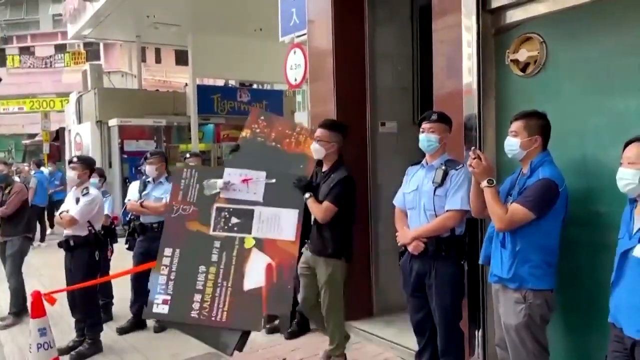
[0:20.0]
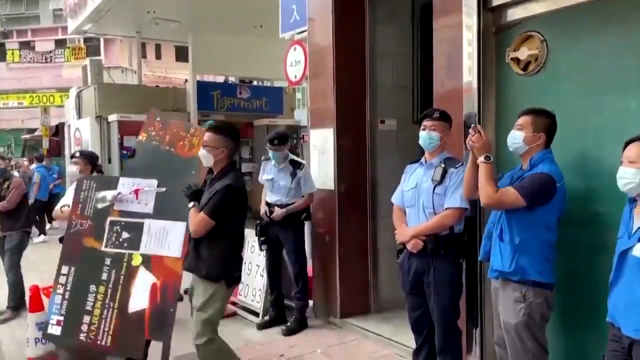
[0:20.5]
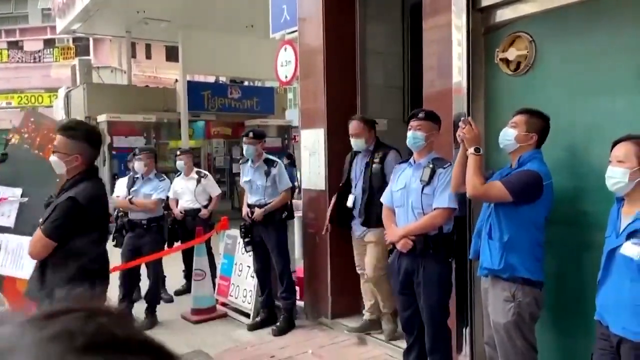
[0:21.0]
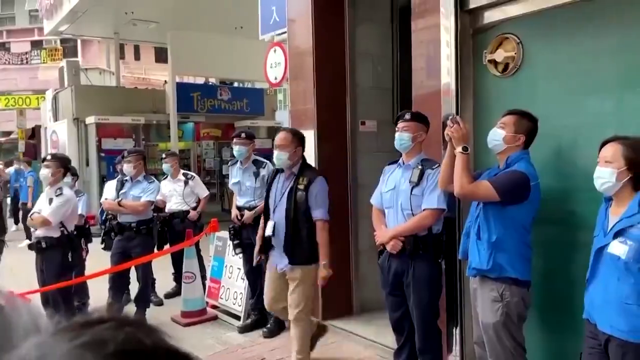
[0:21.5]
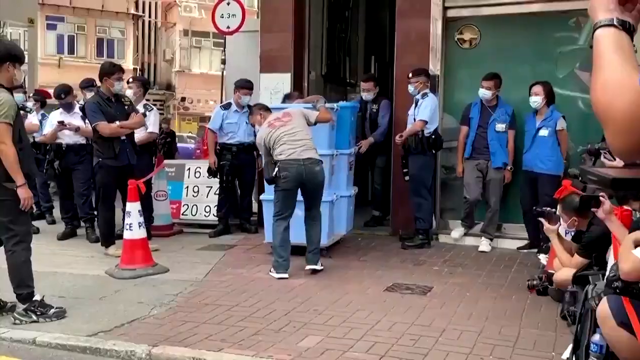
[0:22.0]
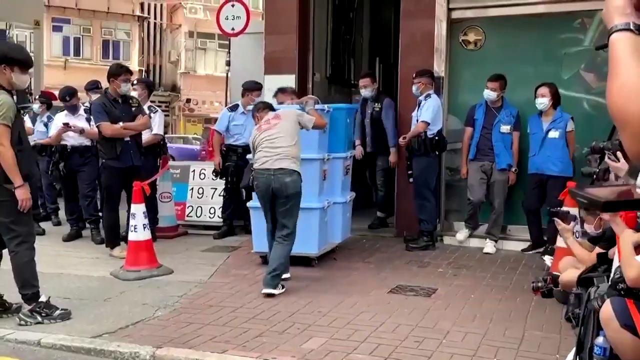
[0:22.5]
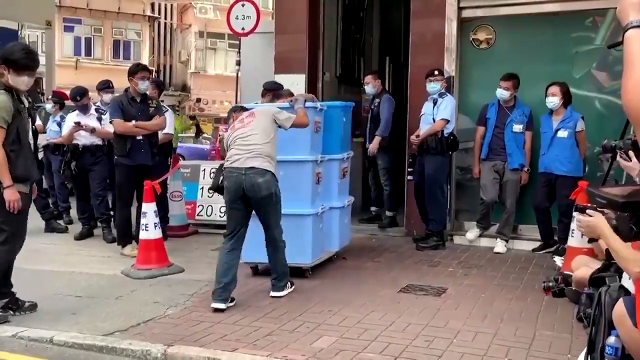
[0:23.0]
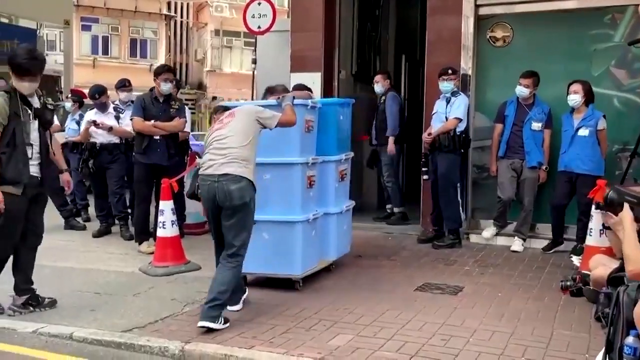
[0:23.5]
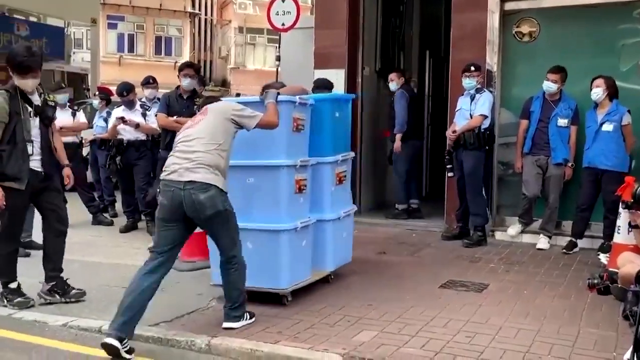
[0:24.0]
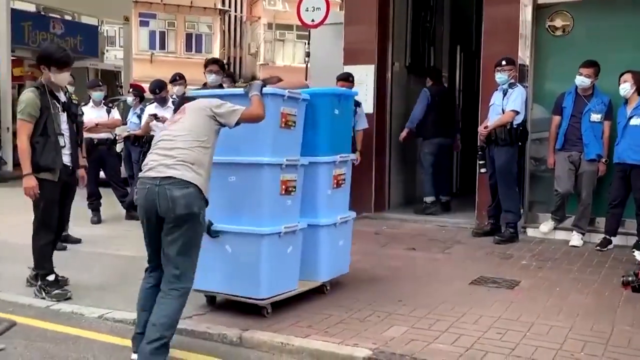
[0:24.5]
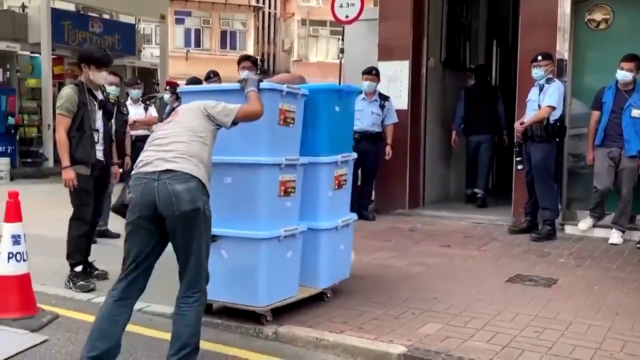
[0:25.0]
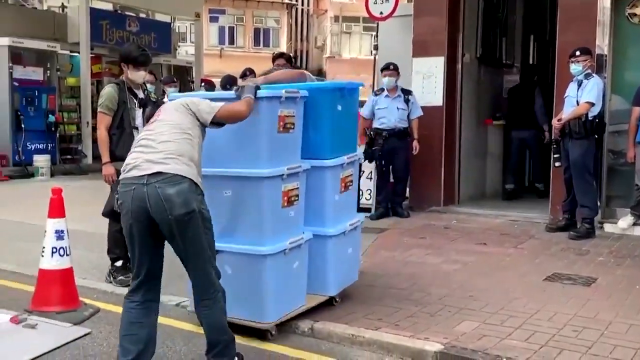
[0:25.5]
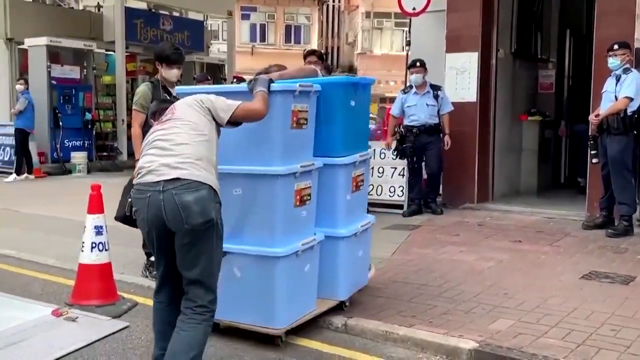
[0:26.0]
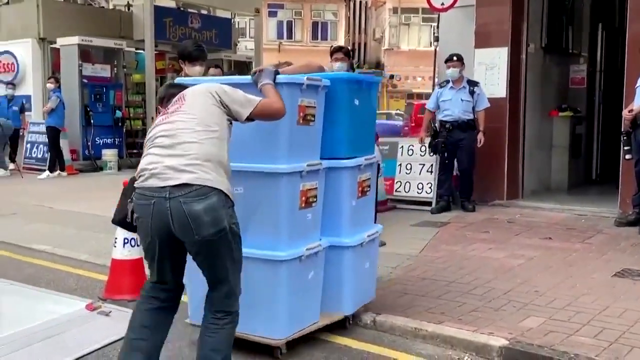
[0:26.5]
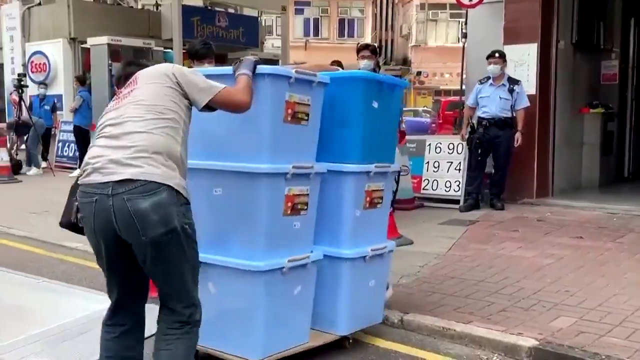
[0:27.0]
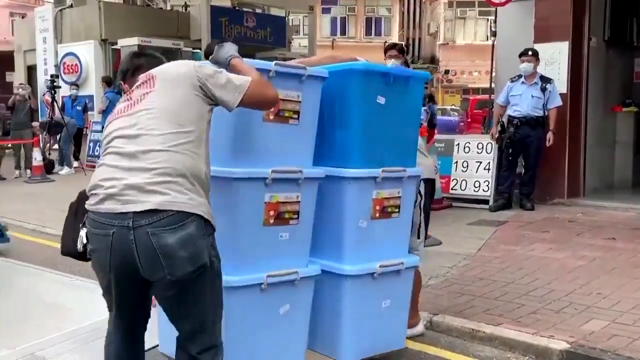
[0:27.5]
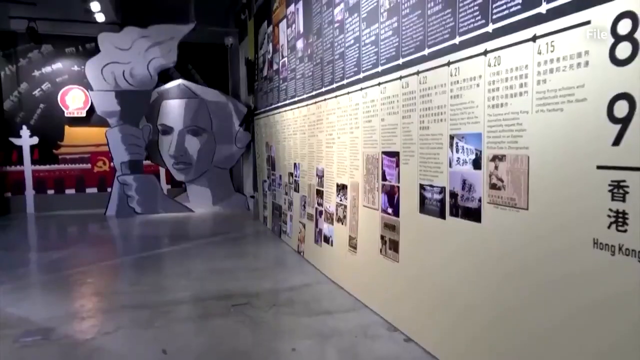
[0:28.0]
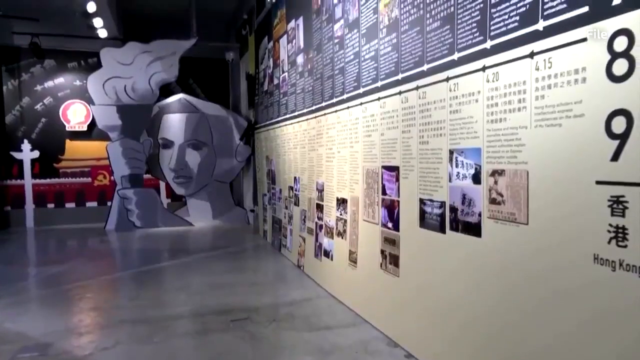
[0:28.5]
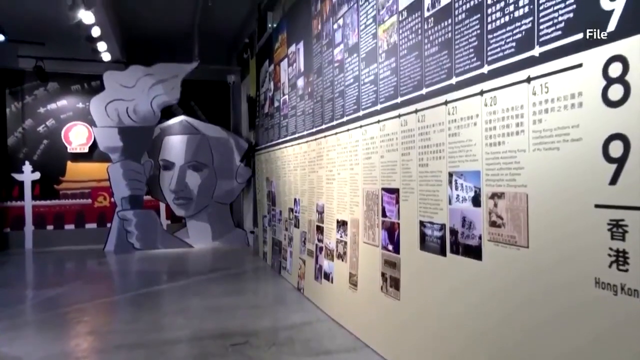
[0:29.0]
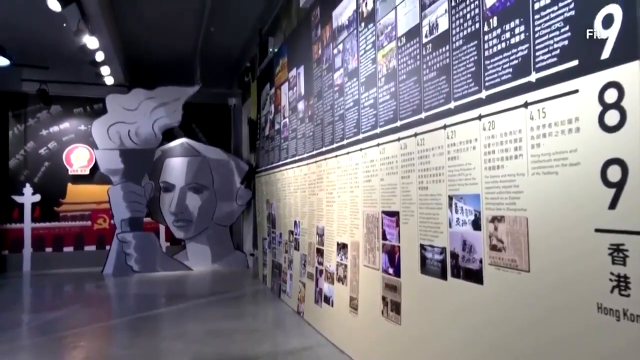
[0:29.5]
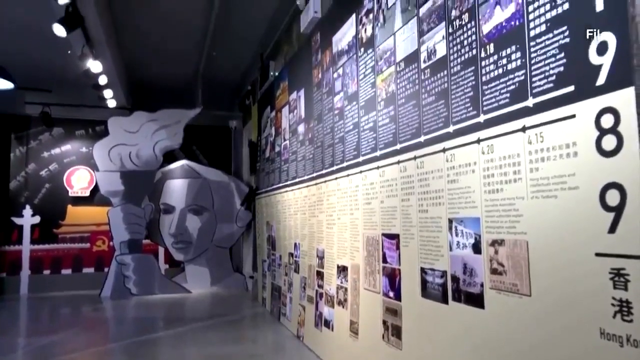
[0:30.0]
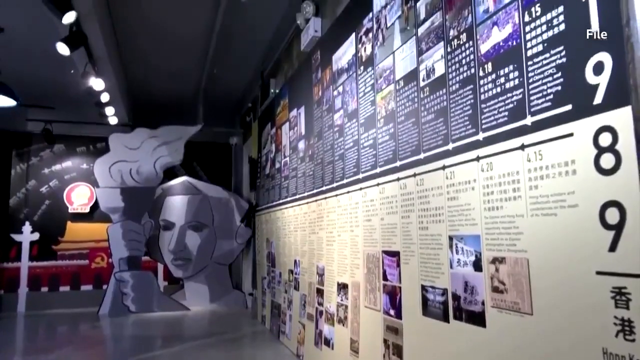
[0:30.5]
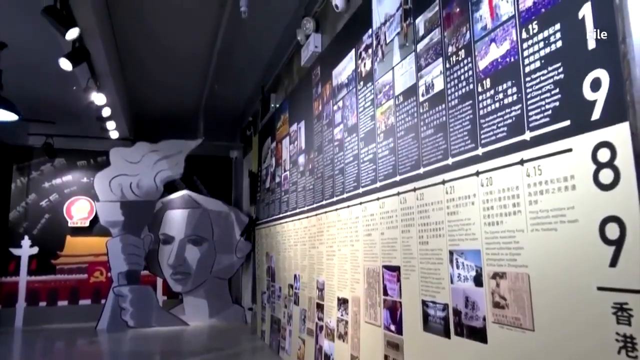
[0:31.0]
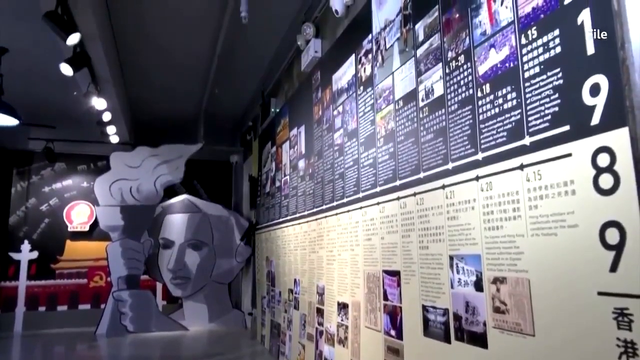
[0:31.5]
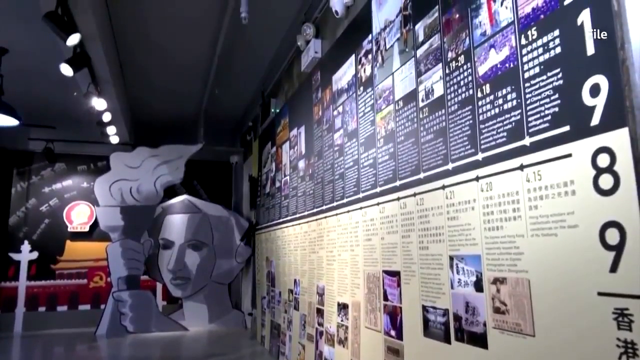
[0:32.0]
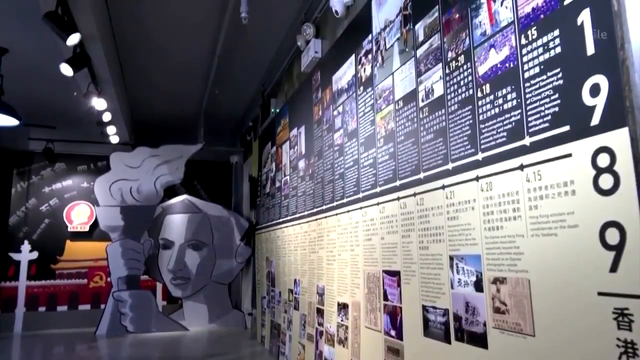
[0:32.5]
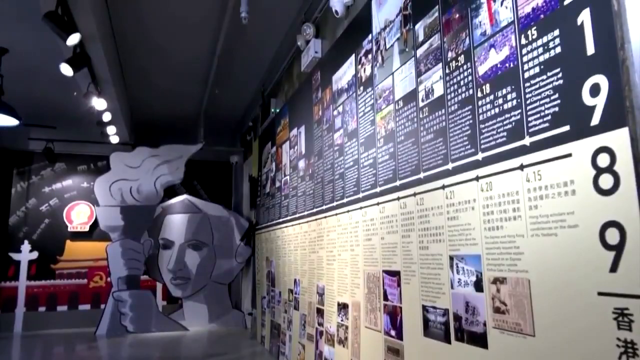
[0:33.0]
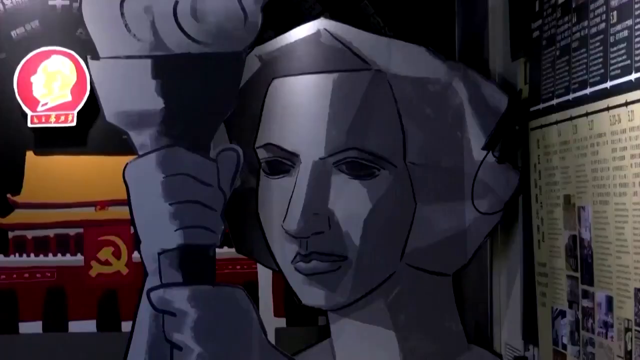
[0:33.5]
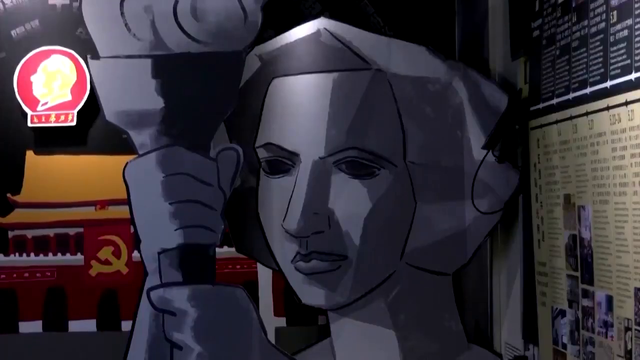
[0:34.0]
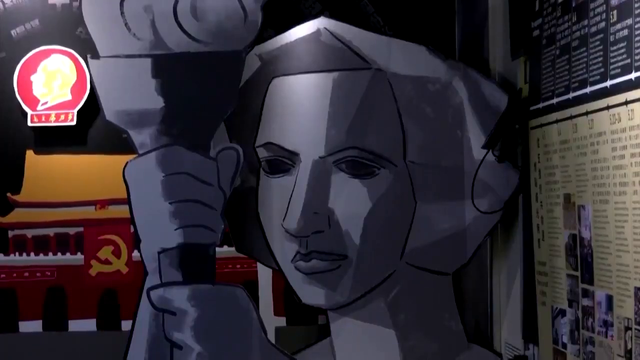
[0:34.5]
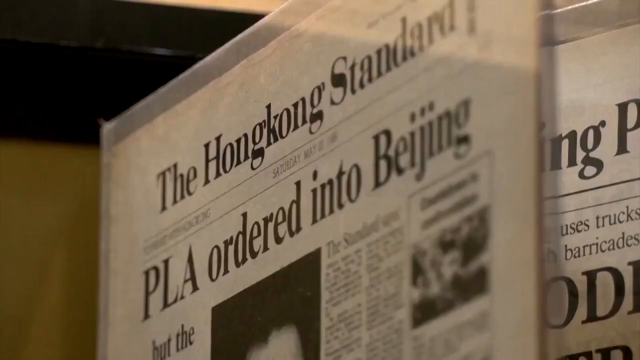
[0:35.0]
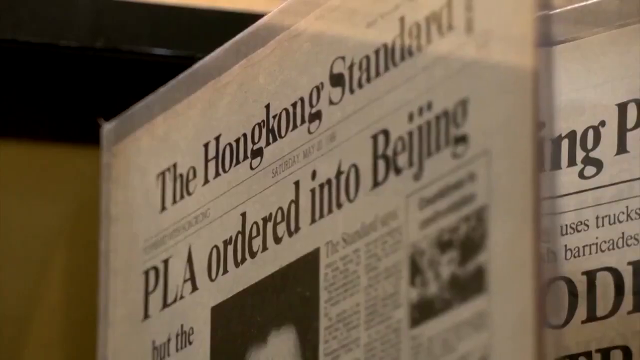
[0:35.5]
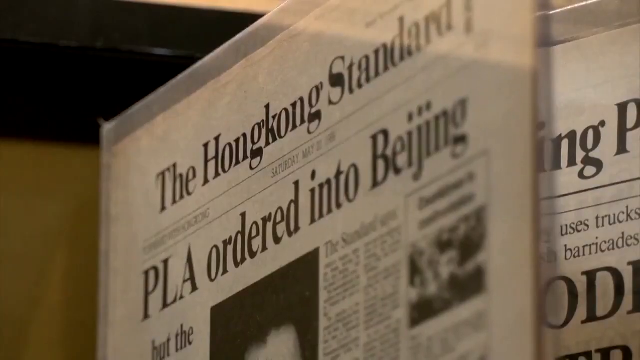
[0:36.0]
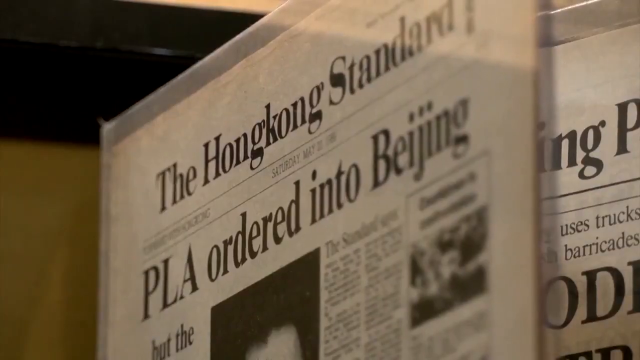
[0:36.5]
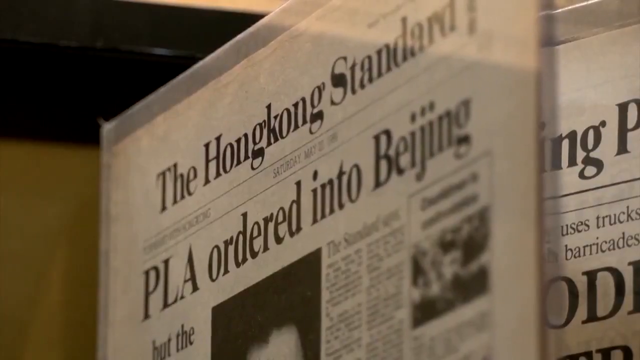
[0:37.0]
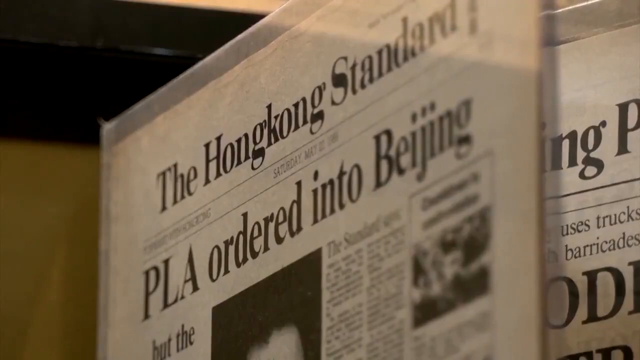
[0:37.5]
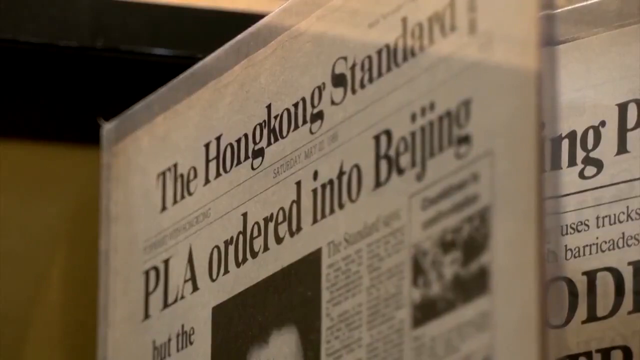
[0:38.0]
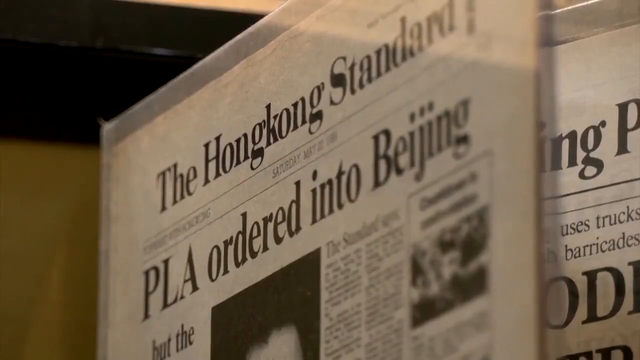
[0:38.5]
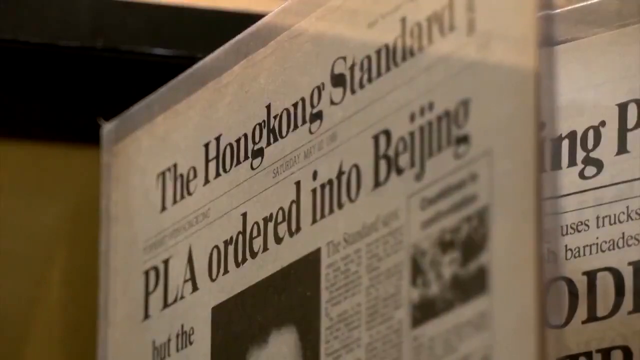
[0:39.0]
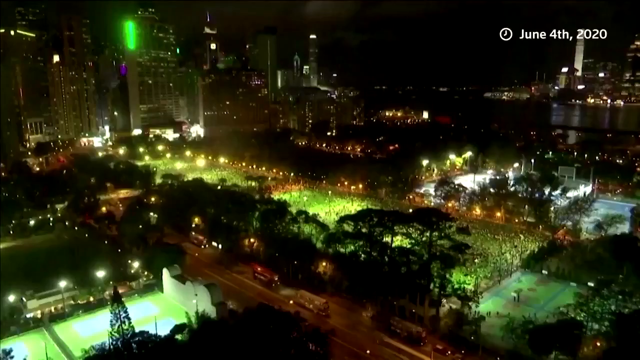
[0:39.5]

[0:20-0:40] Six light blue plastic tubs, largely identical, are brought out of the building towards the van. The view then moves inside the museum, where the wall shows a series of time stamps reading "4.15", "4.20", "4.21", "4.22" and continuing into the distance, each accompanied by writing and images of what happened at that time. On the right of the picture are the numbers 8 and 9, "Hong Kong" and some Chinese writing, which appear to be some sort of independence remembrance. On the left is a statue or artistic poster showing a woman in grayscale holding a flame, apparently an image of independence or liberty. Elsewhere in the room the wall is split into two halves, the bottom cream-coloured and the top black, and a date shows 1989 as the year of the events. The view then zooms into a newspaper that reads "Hong Kong Standard, PLA ordered into Beijing".